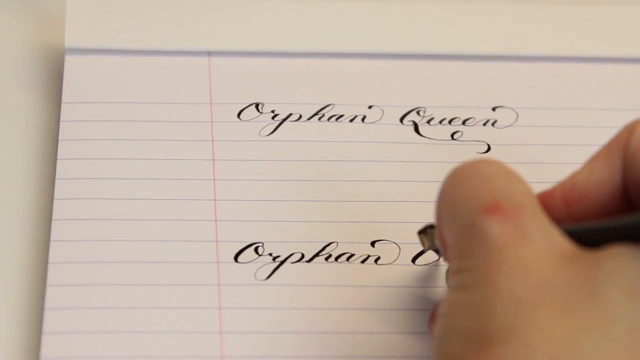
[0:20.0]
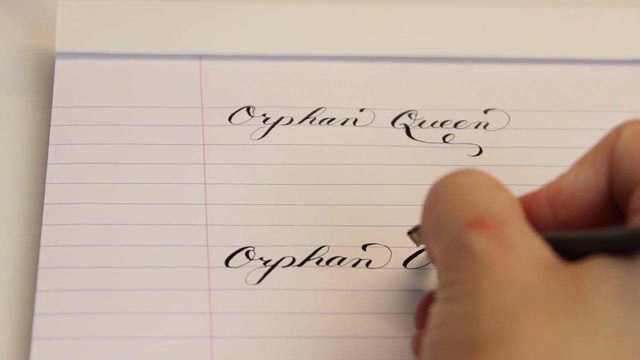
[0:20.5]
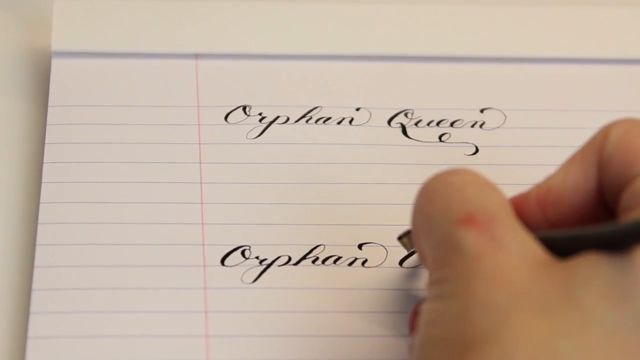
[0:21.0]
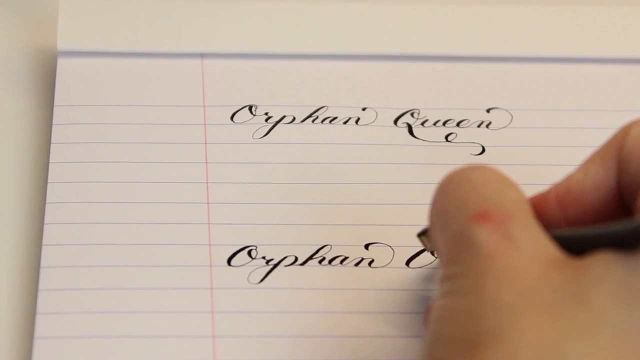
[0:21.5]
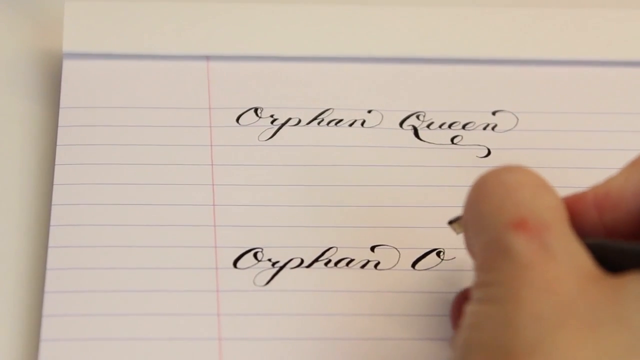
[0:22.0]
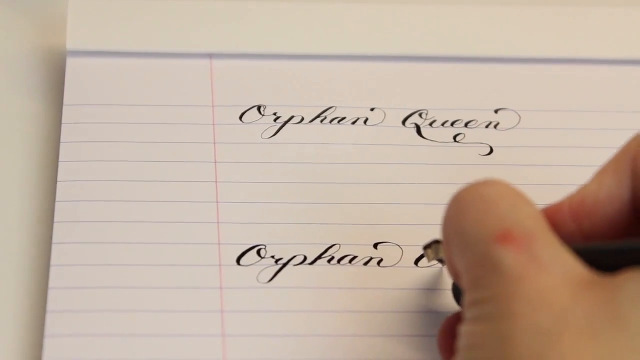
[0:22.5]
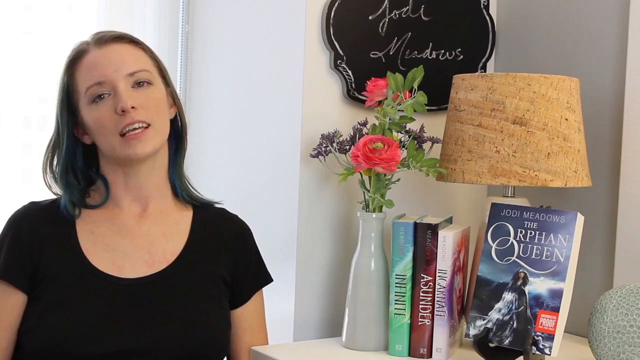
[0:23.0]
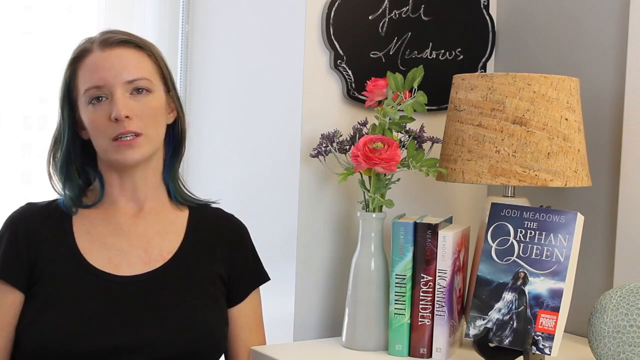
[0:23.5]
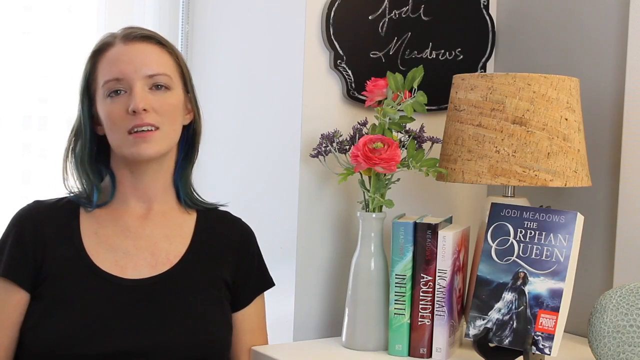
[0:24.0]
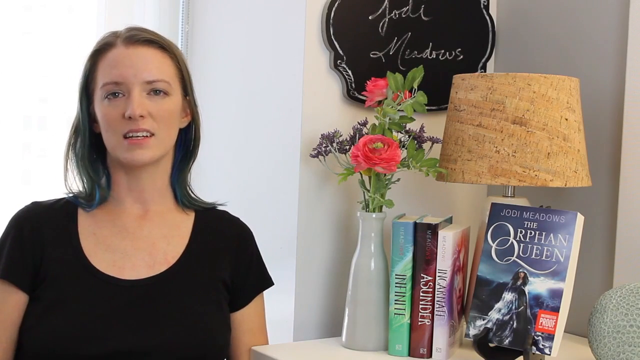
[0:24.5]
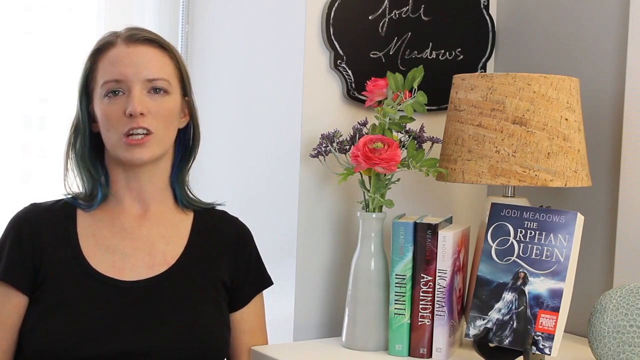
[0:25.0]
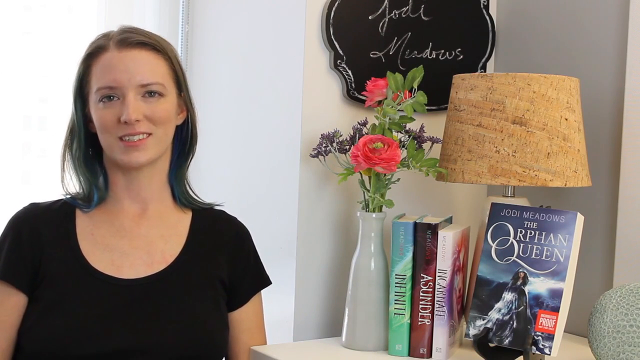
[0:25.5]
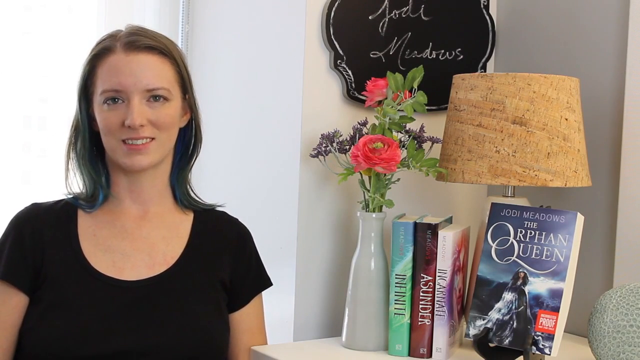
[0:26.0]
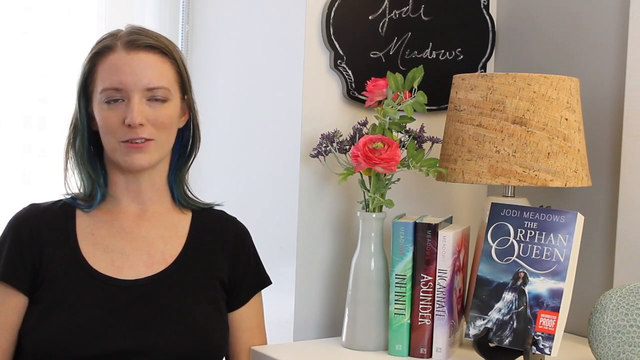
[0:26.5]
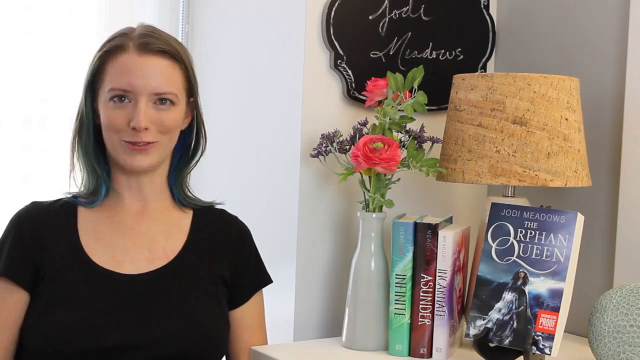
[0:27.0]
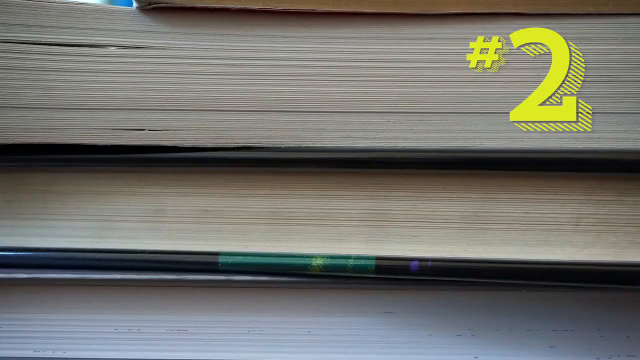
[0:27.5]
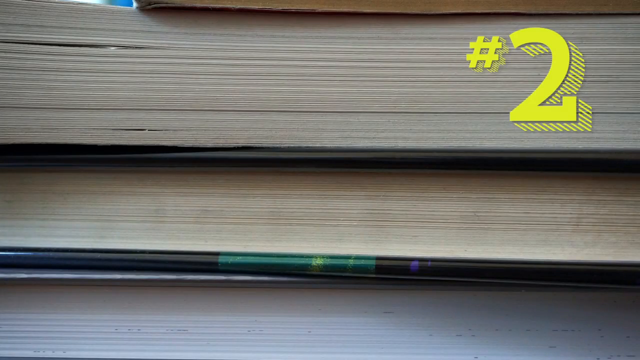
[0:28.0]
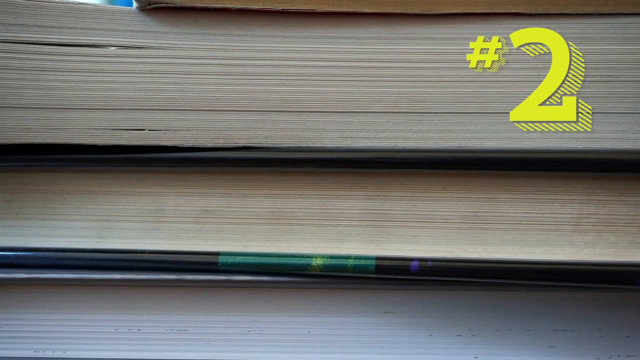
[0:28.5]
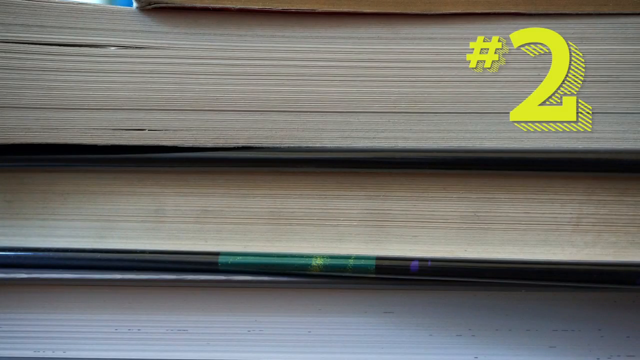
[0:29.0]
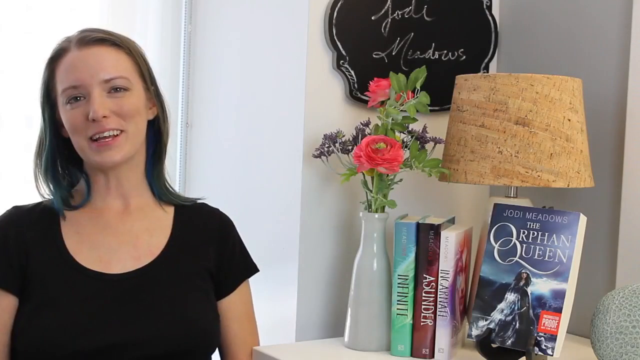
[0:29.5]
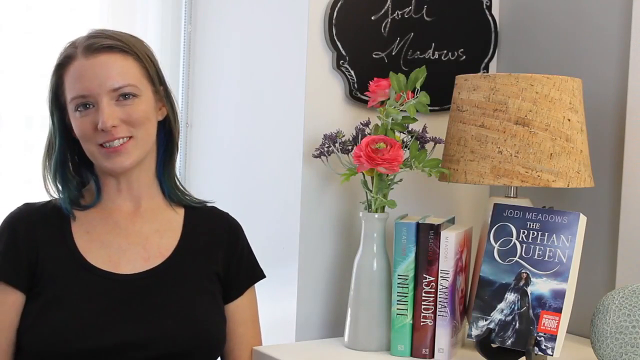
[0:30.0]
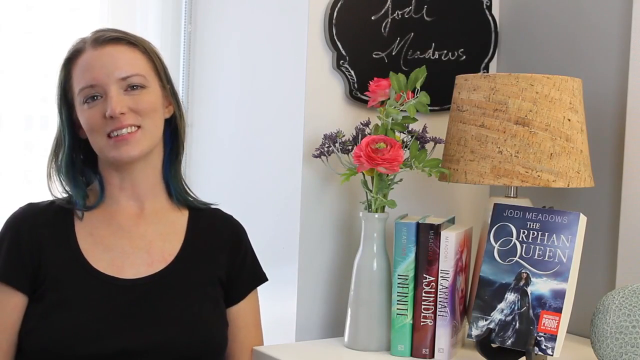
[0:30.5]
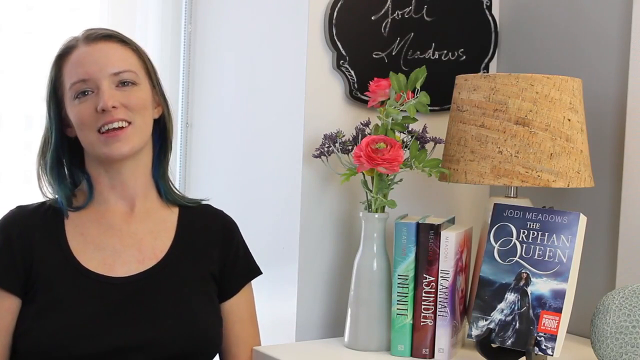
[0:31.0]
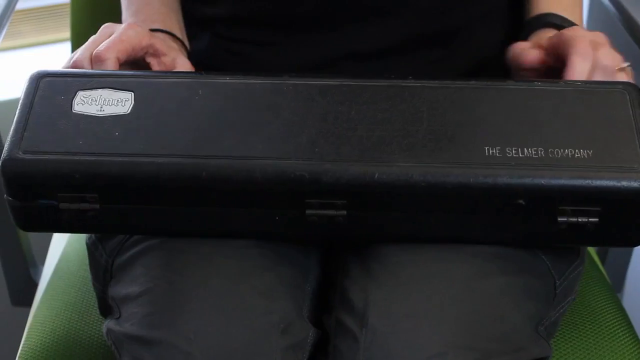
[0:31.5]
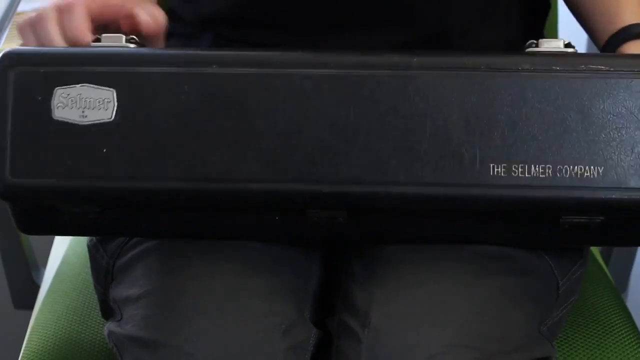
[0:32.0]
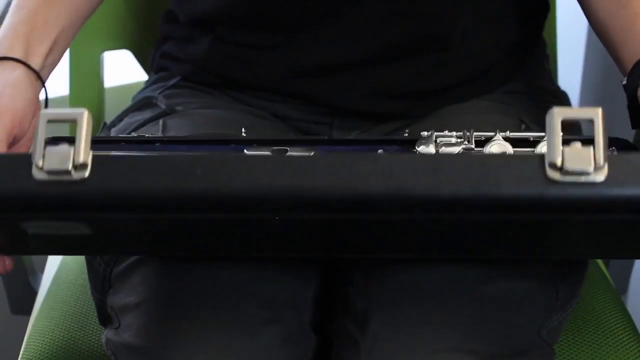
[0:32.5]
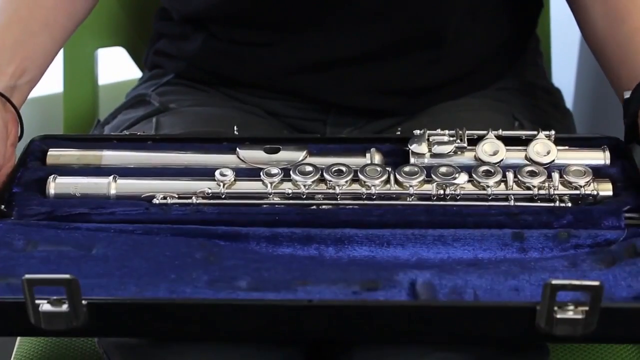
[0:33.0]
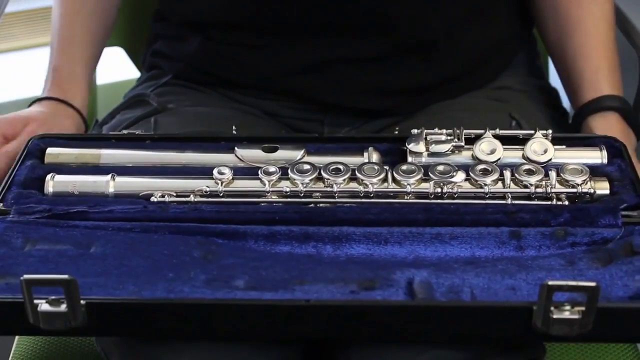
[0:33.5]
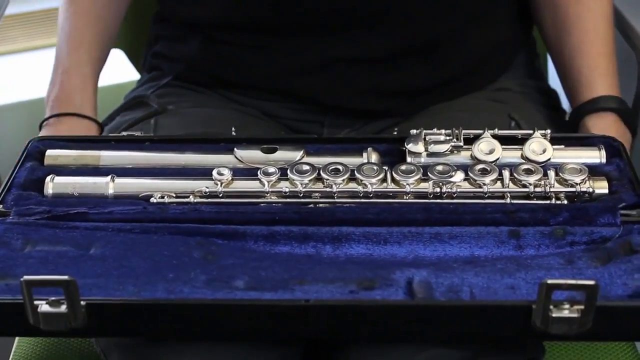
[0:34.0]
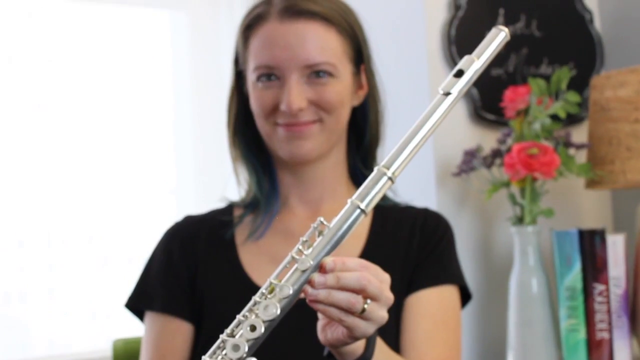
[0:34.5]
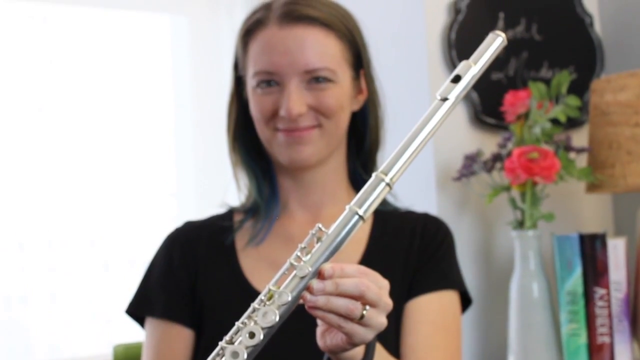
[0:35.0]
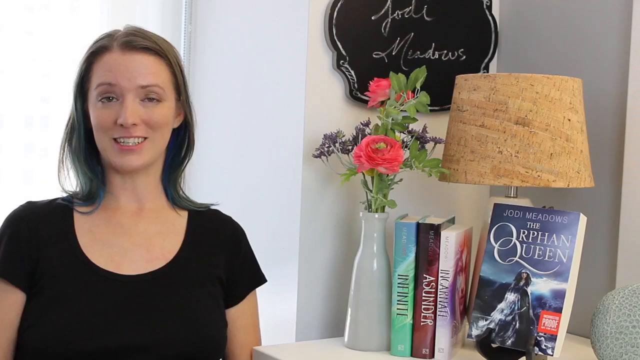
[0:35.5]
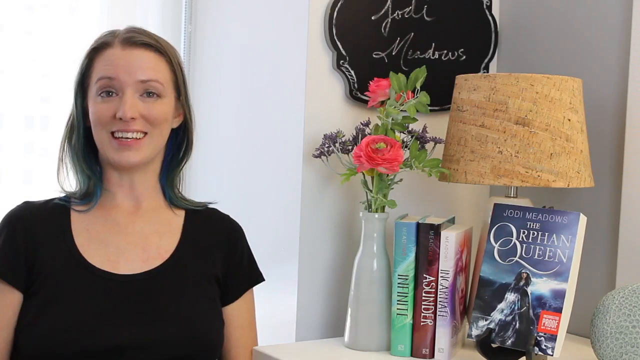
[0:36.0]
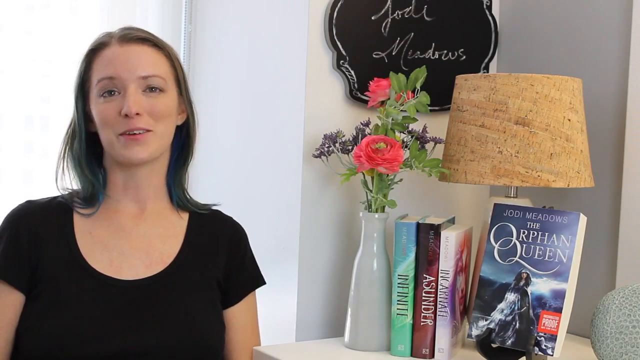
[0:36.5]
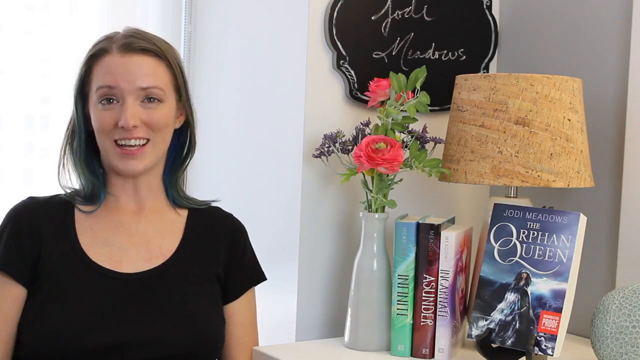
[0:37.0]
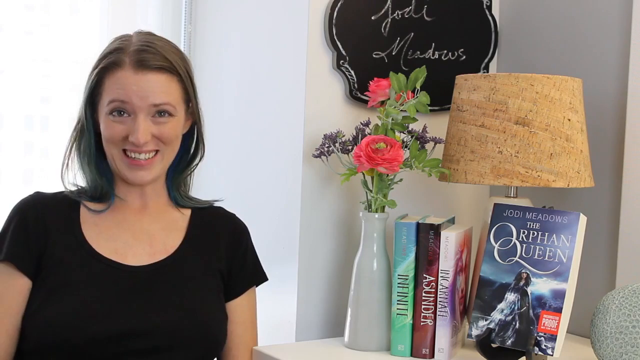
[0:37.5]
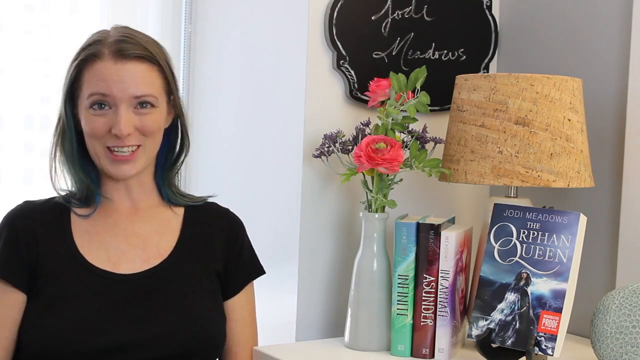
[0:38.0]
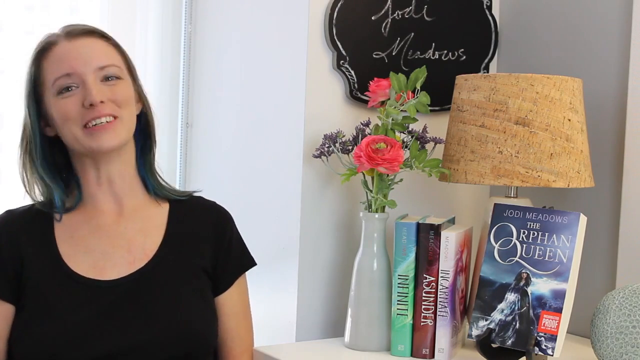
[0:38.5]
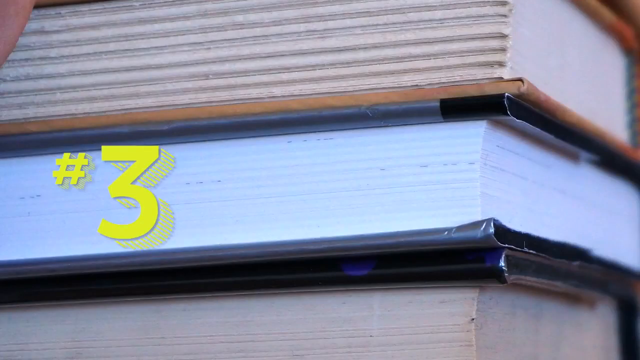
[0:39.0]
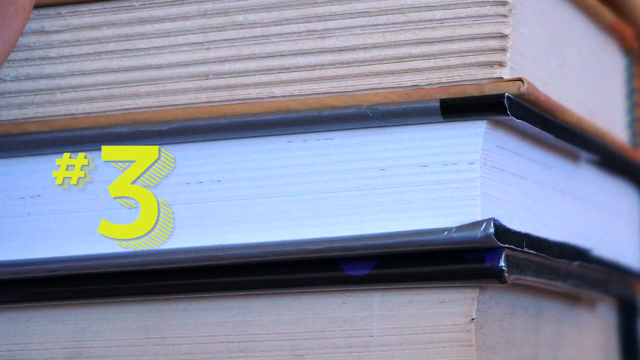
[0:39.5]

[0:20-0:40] A hand writes intricate cursive calligraphy on notebook paper, having written the words "Orphan Queen" twice. The video cuts to a woman next to a bookshelf. She wears a short black shirt with short sleeves and has long brown hair and brown eyes. A blackboard hangs on the wall above the bookshelf with the words "Jodie Meadows" written on it in white chalk. A lamp sits on the bookshelf next to a vase with pink flowers, and a book called The Orphan Queen by Jodie Meadows faces forward on the shelf. The video cuts to an image of books stacked on top of each other with a yellow number 2 superimposed over them, then back to the woman by the bookshelf, who continues to speak. Next, the woman opens a musical instrument case with a disassembled flute inside; she puts the flute together and holds it up, smiling. She continues speaking in front of the bookcase, and then the video cuts to a static image of books stacked on top of each other with the number three superimposed over them.